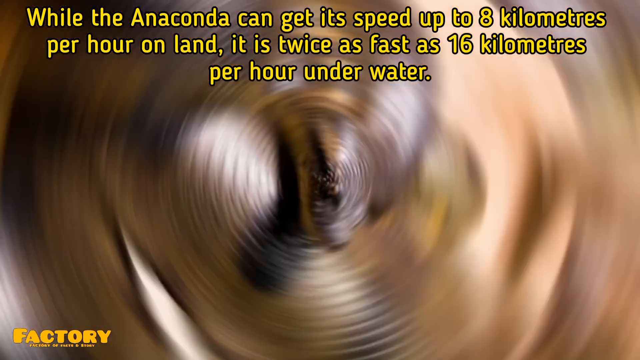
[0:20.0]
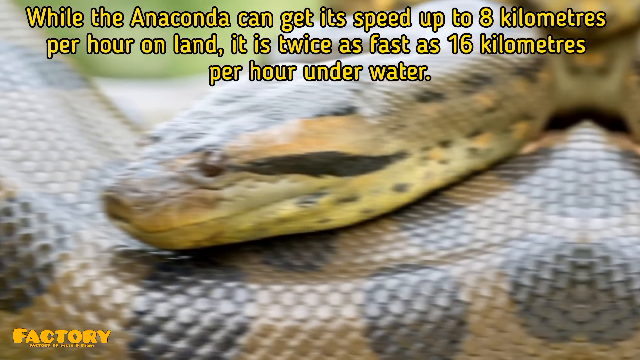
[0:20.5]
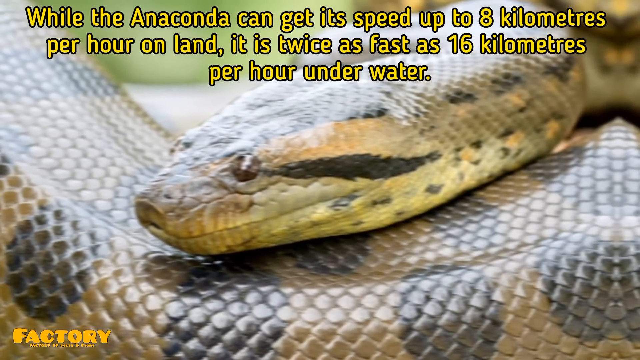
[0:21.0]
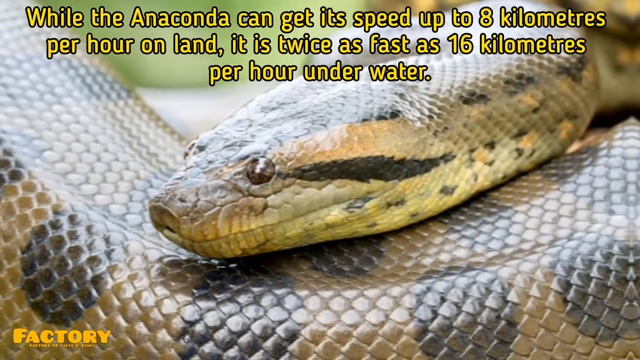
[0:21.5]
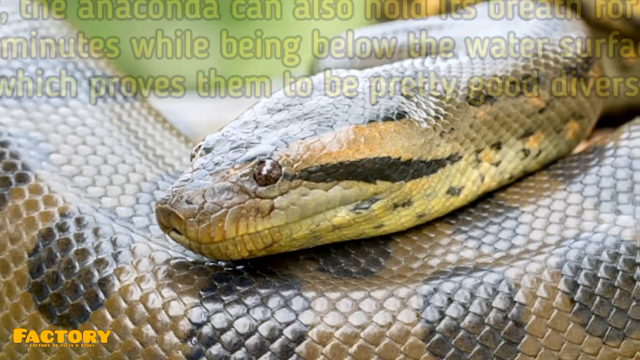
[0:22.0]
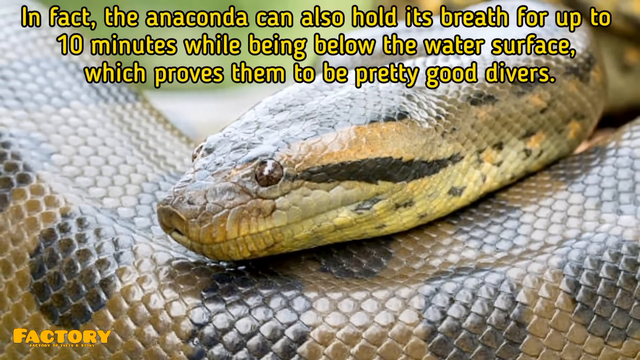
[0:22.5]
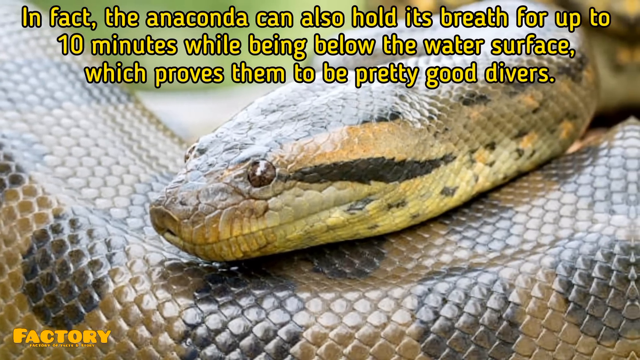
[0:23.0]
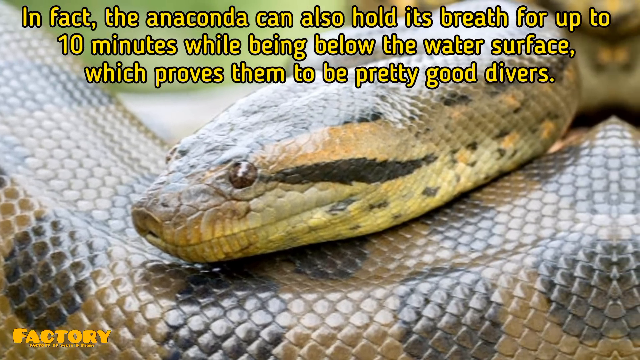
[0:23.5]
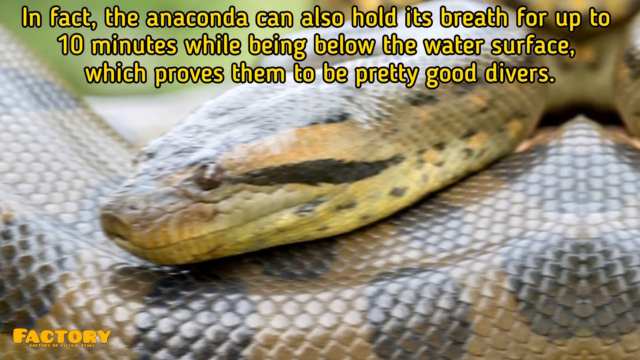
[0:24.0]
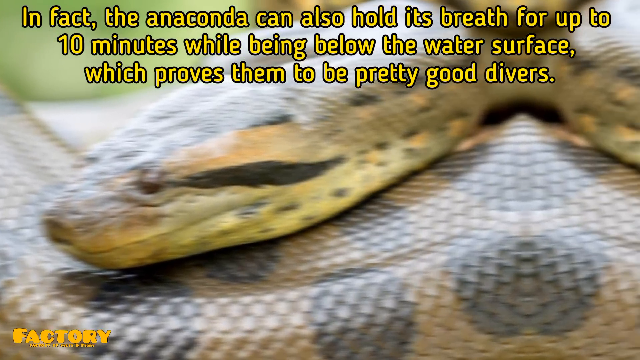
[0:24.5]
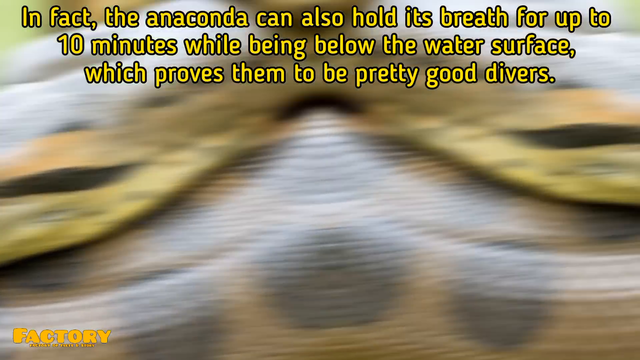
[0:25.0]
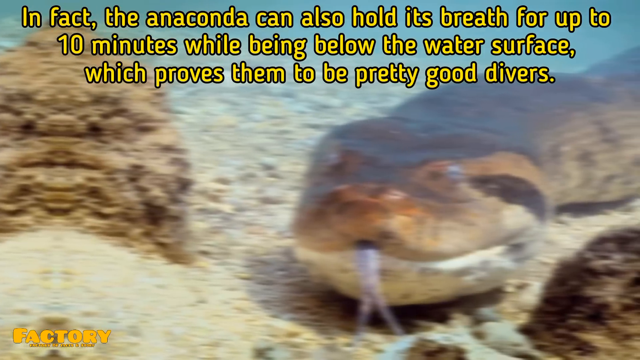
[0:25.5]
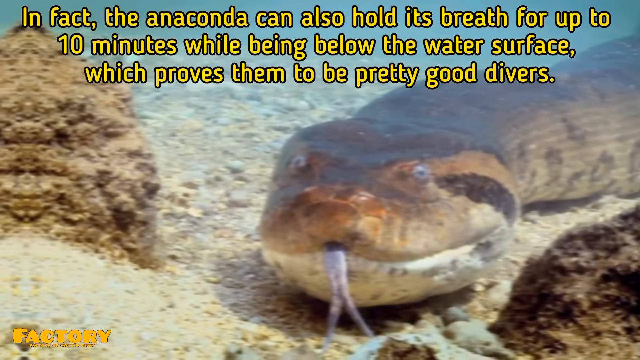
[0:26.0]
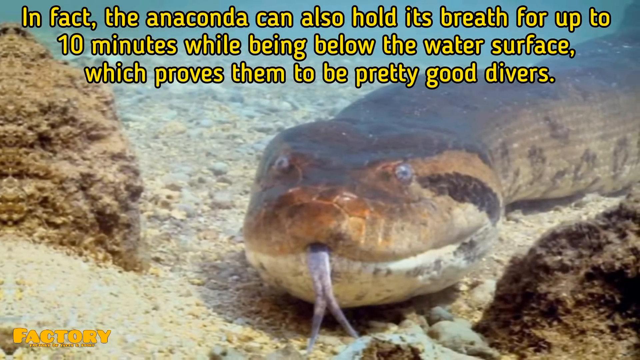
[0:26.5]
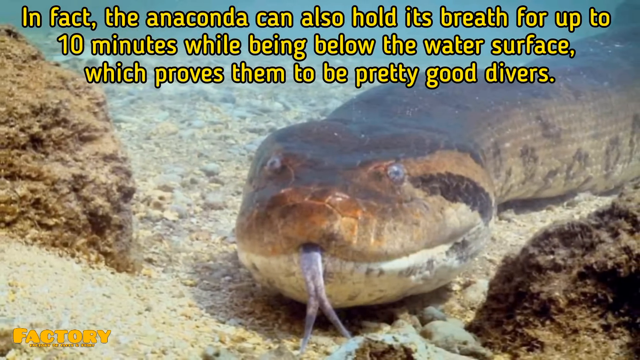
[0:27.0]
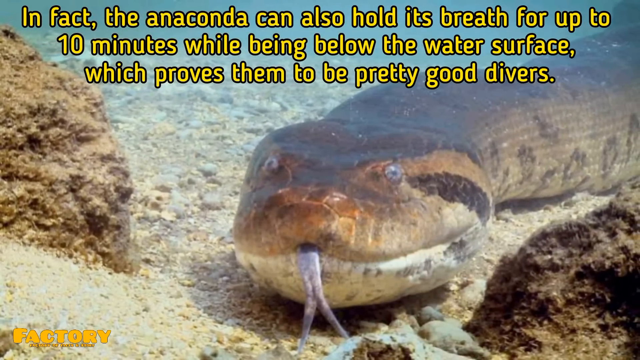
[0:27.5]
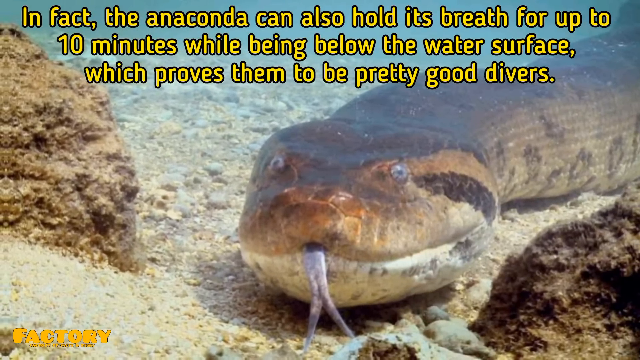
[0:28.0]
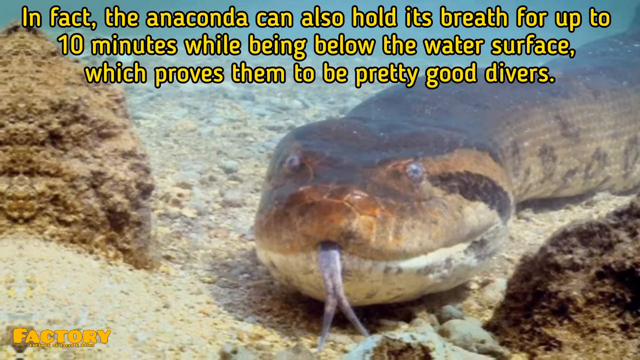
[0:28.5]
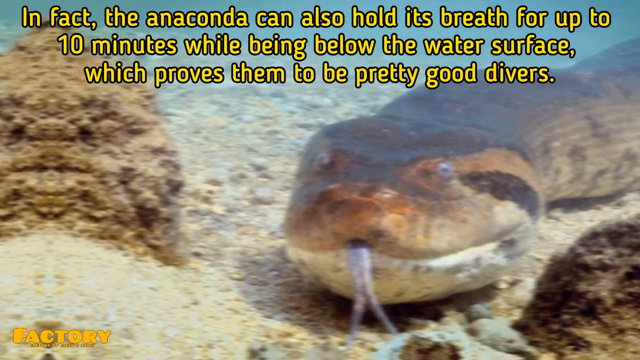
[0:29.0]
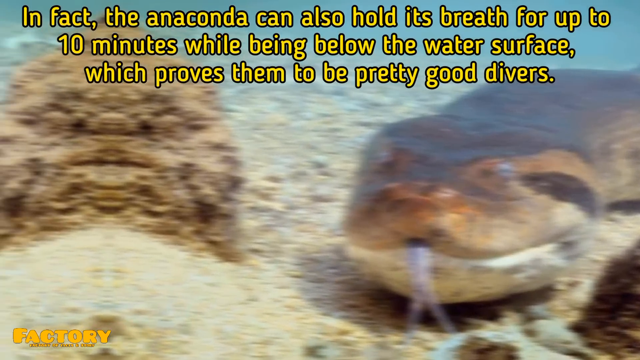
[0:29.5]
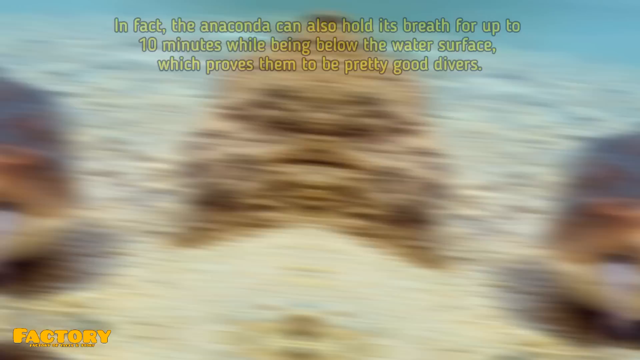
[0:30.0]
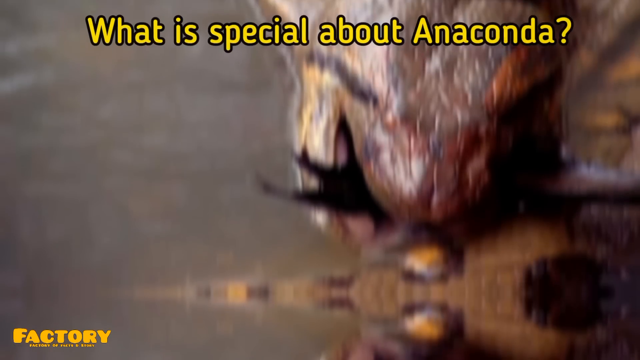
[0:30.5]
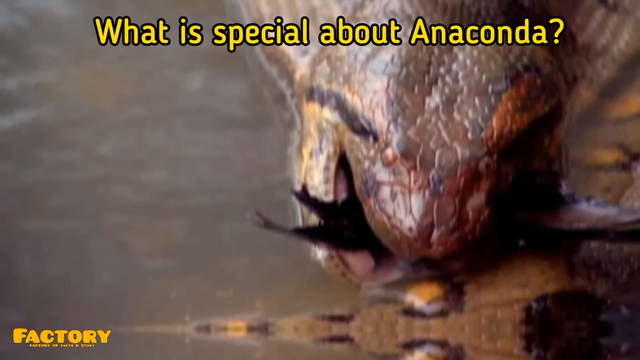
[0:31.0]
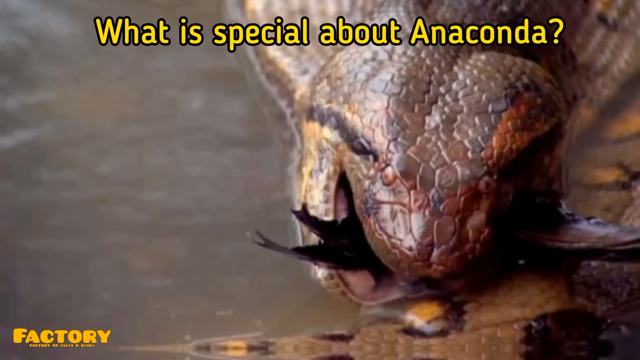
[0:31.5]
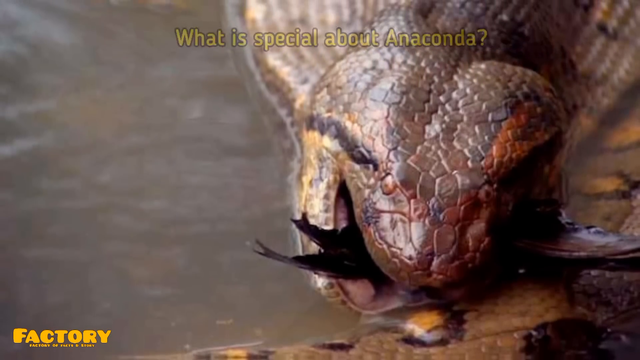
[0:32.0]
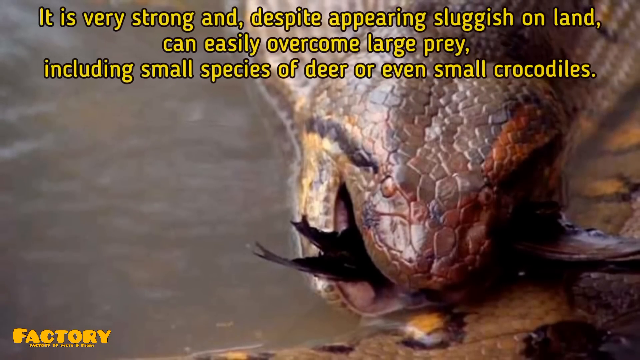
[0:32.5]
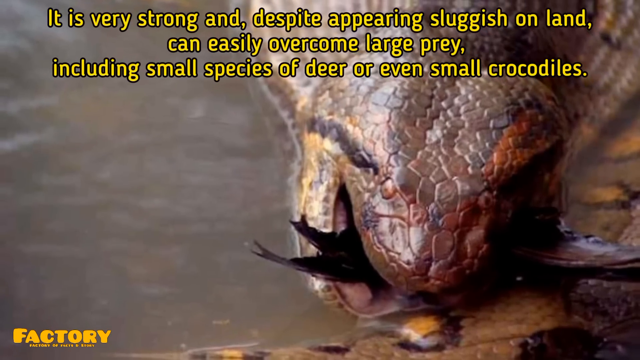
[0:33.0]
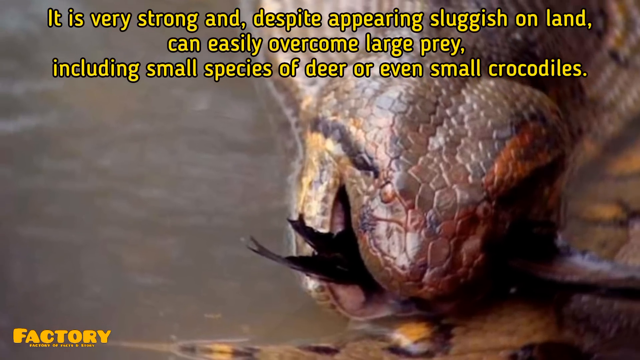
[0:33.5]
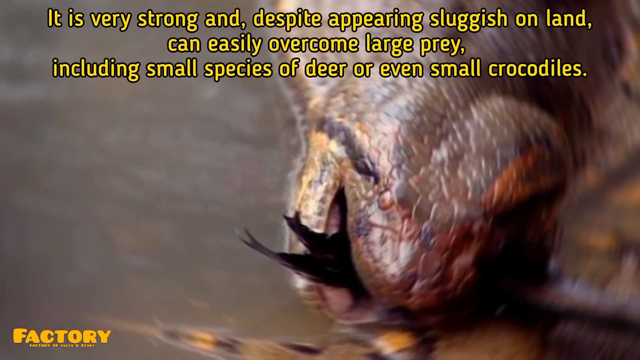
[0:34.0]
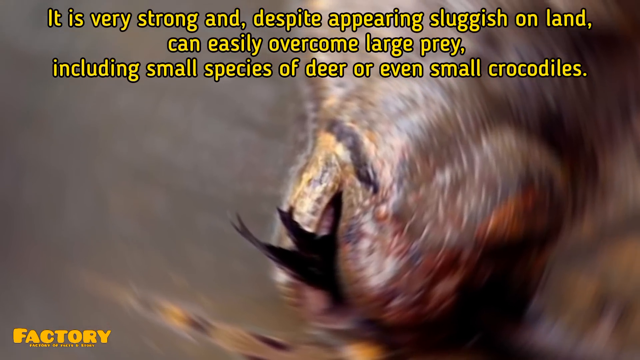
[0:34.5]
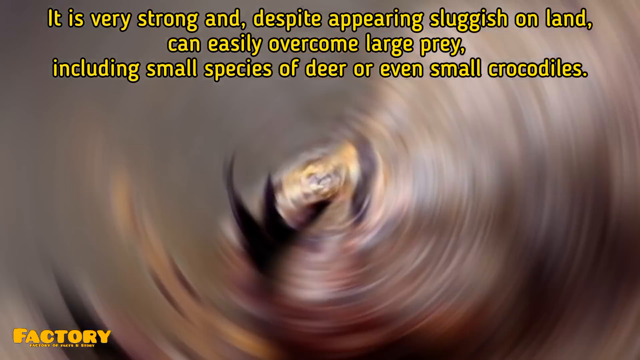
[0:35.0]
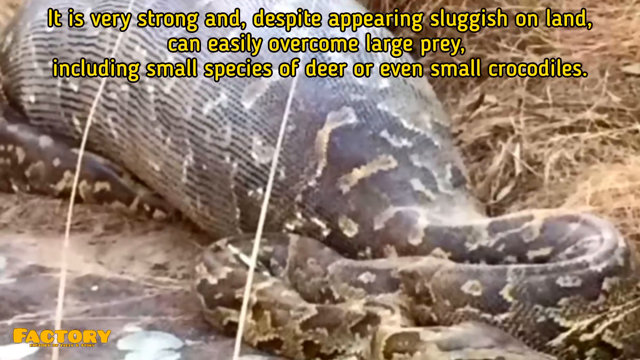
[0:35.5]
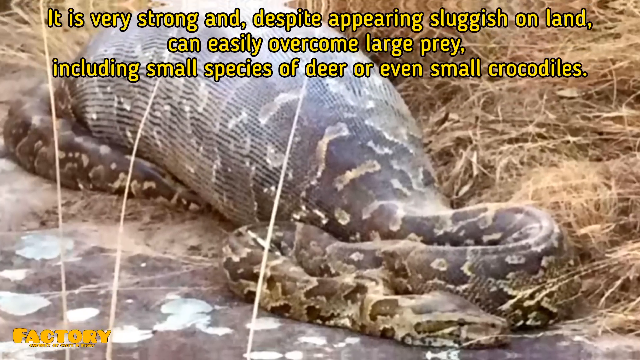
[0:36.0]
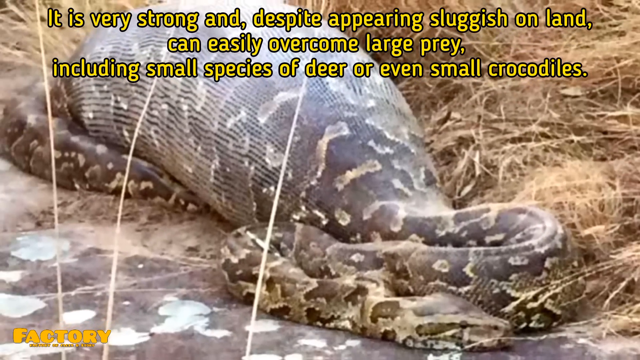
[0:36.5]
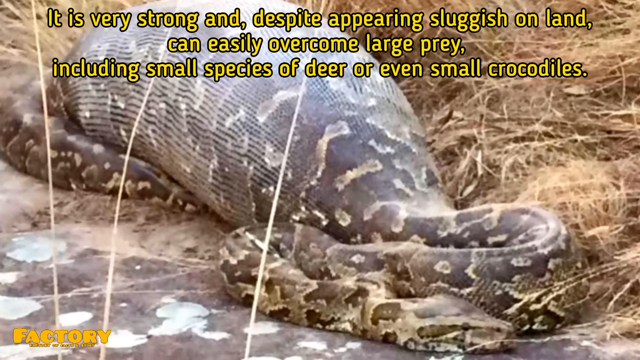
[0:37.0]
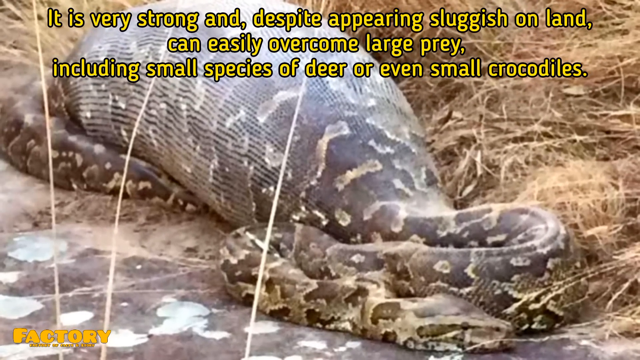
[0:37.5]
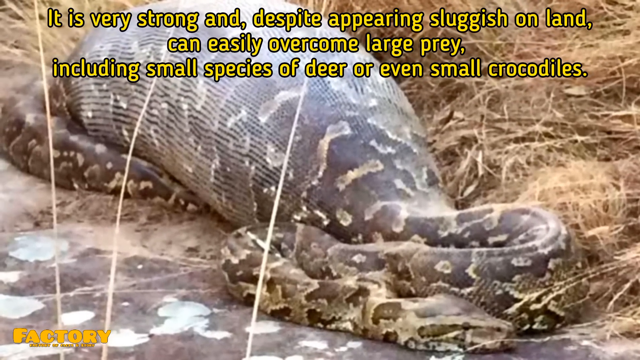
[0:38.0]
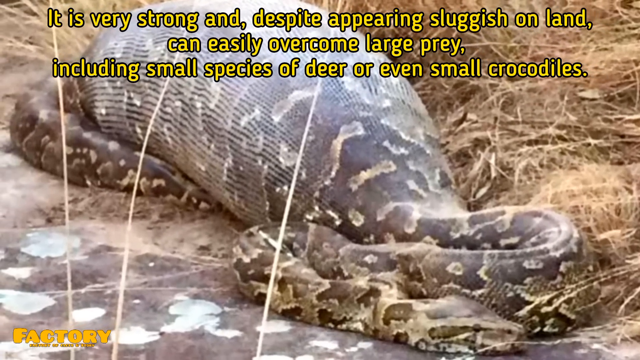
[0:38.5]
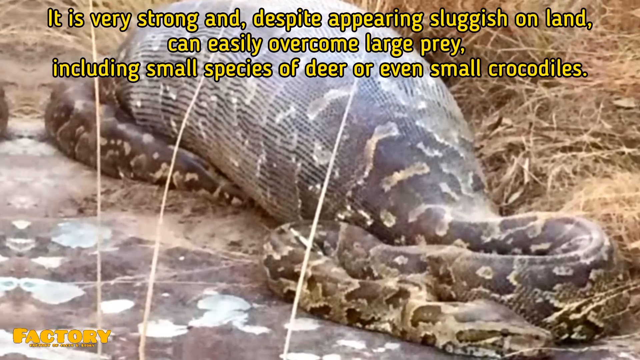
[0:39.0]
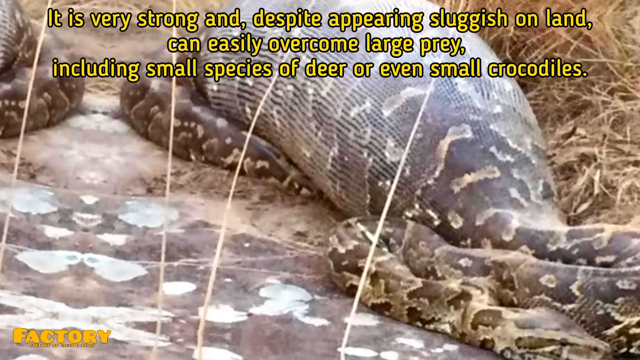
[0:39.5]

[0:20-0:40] The yellow text at the top remains and reads "while the anaconda can get its speed up to 8 kilometers per hour on land, it's twice as fast as 16 kilometers per hour underwater." A close-up shows an anaconda's face, very brownish with some black spots. The text at the top changes, in the same yellow colour, to "In fact, the anaconda can also hold its breath for up to 10 minutes while being below the water's surface, which proves them to be pretty good divers." The scene changes to a shot of an anaconda underwater with its tongue out, with rocks on the left and right sides. The scene changes again, and the text at the top reads "what's special about anacondas?" The text then changes to "it is very strong and despite appearing sluggish on land, can easily overcome a large prey, including small species of deer or even small crocodiles." The scene changes to a different image of an anaconda with its belly full, and then the scene changes once more.